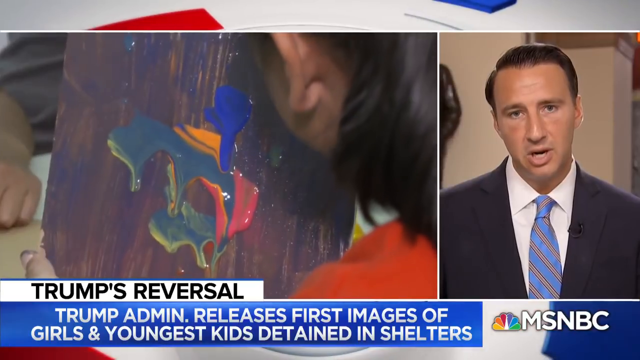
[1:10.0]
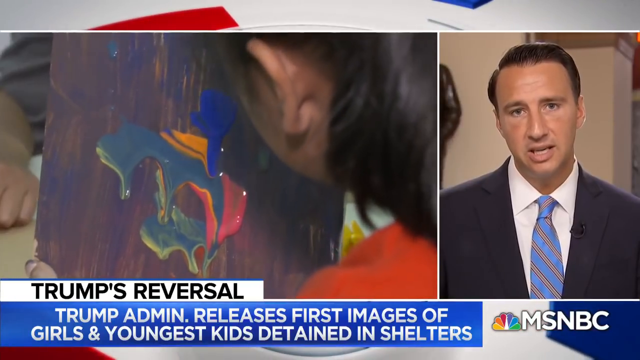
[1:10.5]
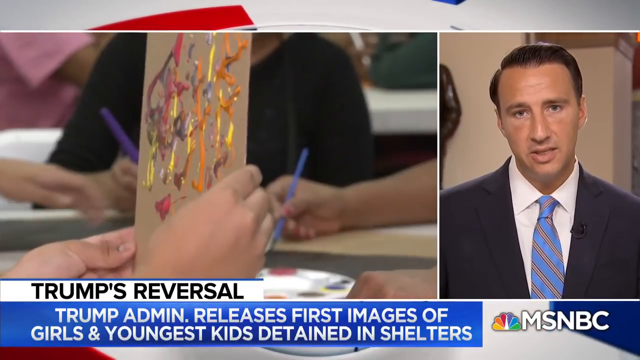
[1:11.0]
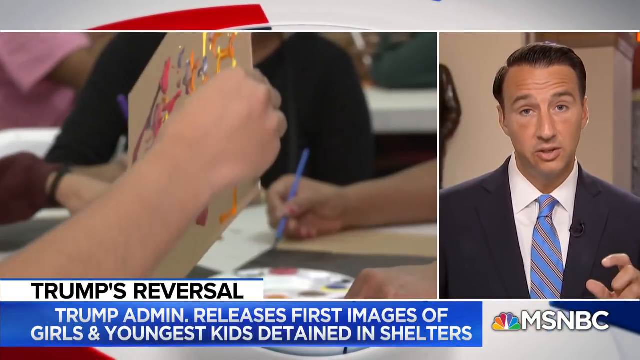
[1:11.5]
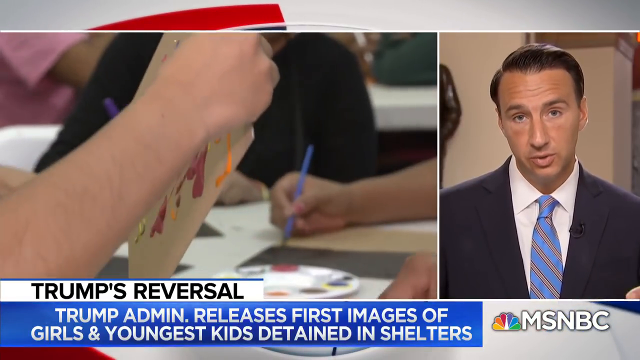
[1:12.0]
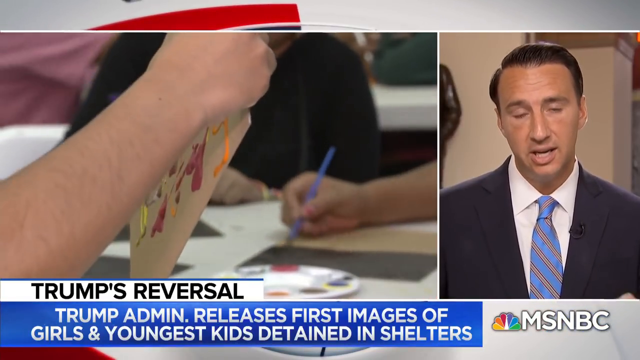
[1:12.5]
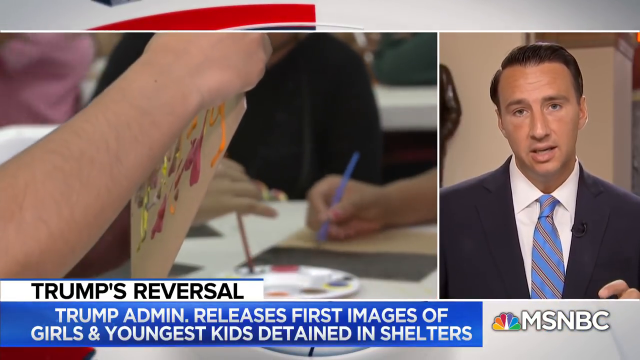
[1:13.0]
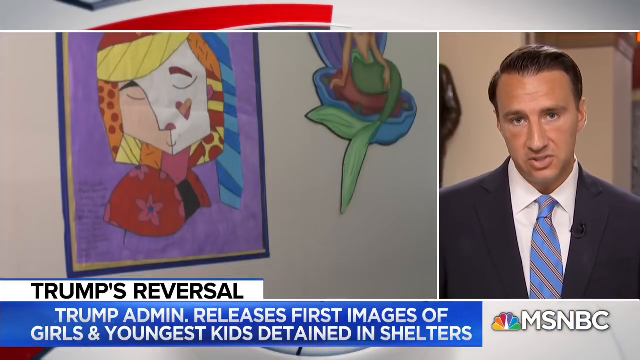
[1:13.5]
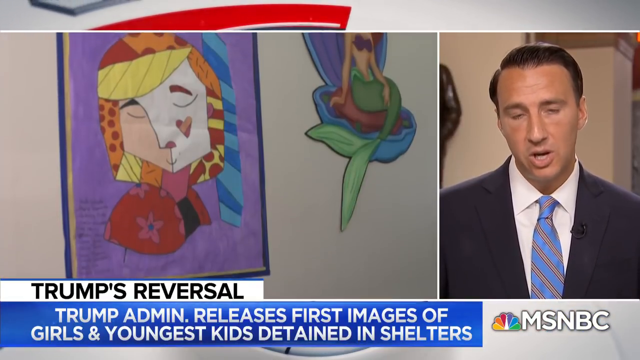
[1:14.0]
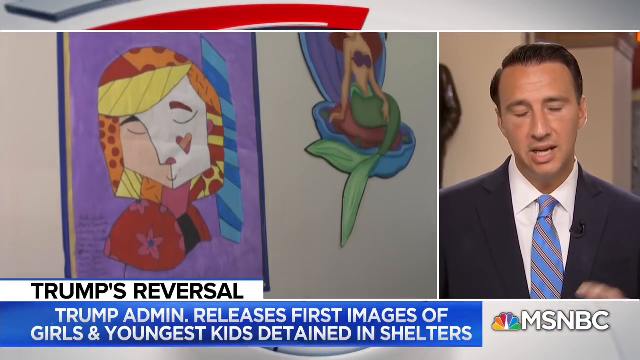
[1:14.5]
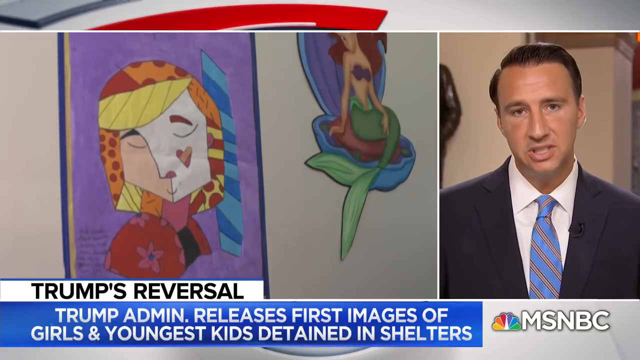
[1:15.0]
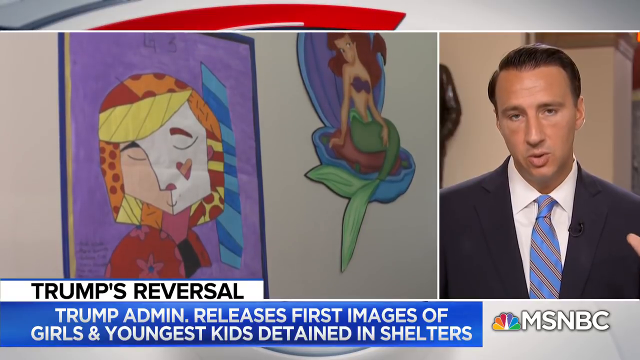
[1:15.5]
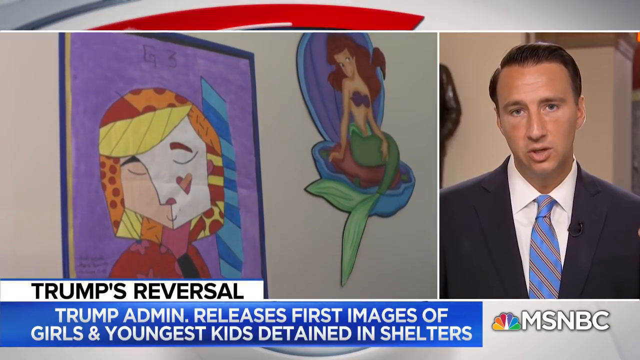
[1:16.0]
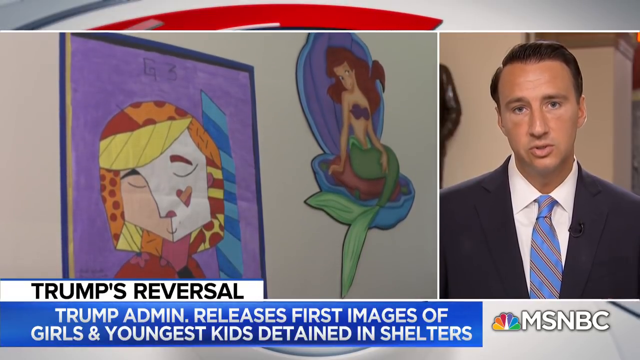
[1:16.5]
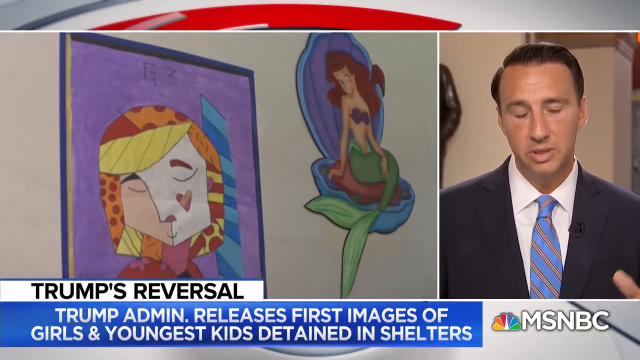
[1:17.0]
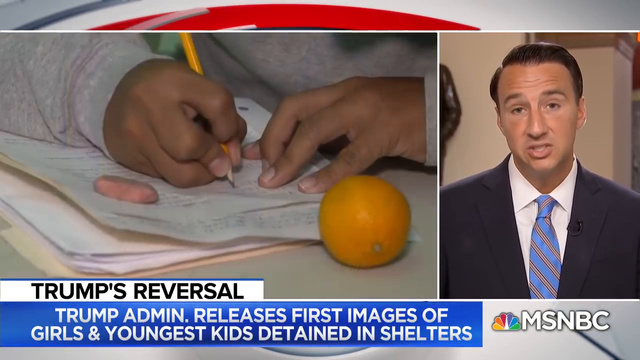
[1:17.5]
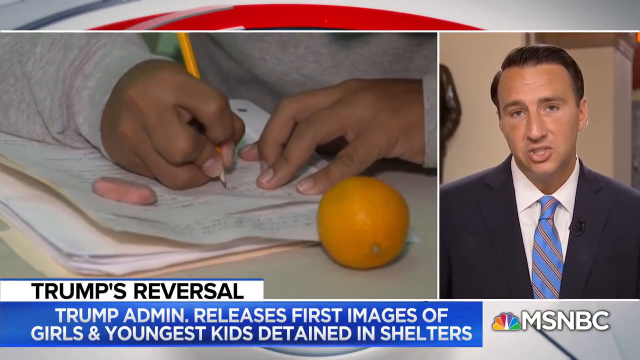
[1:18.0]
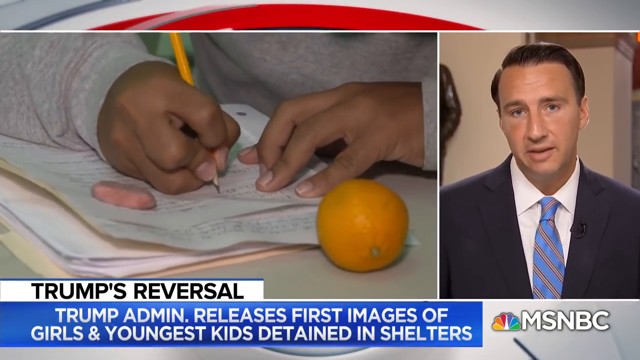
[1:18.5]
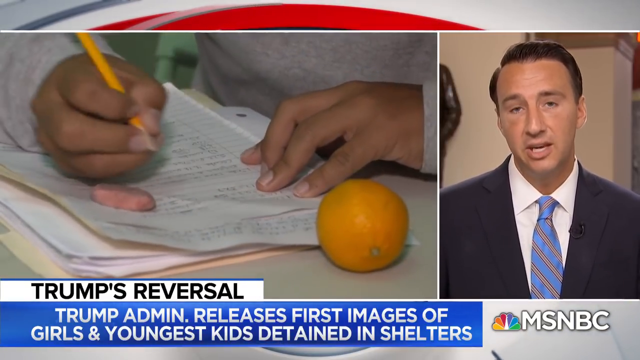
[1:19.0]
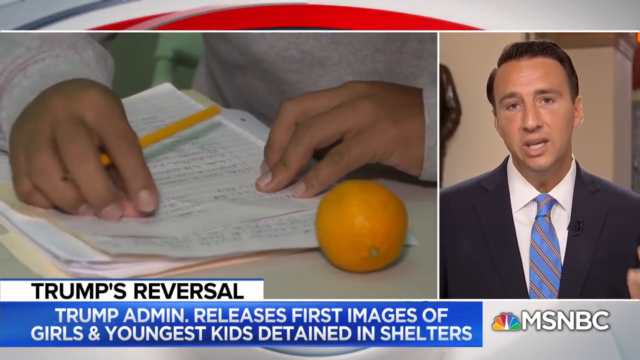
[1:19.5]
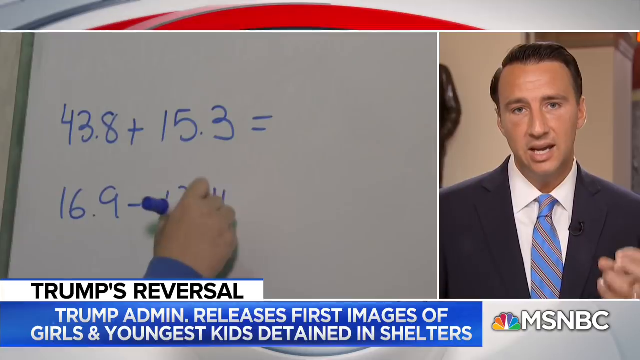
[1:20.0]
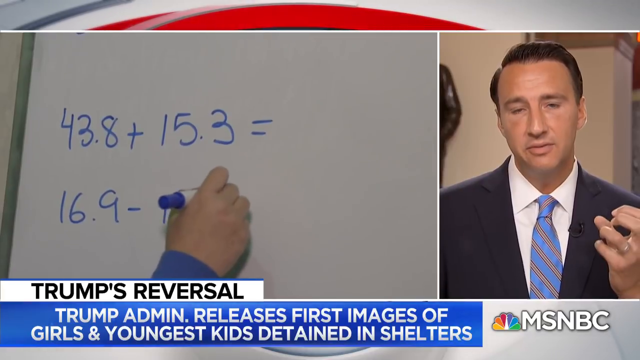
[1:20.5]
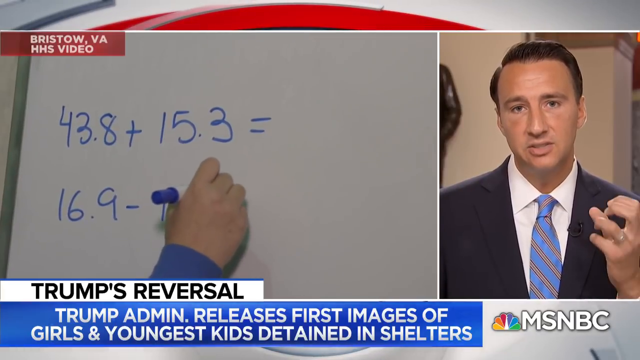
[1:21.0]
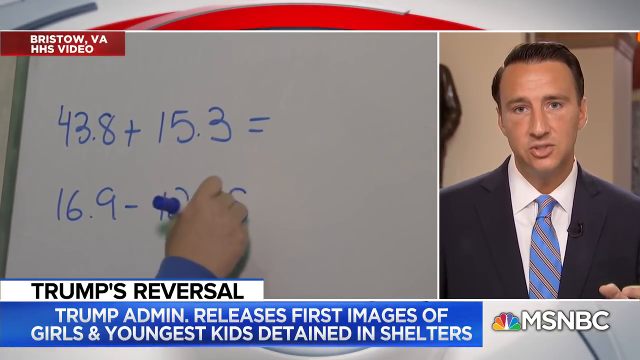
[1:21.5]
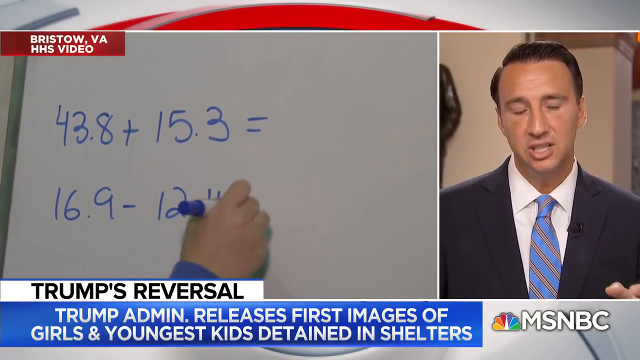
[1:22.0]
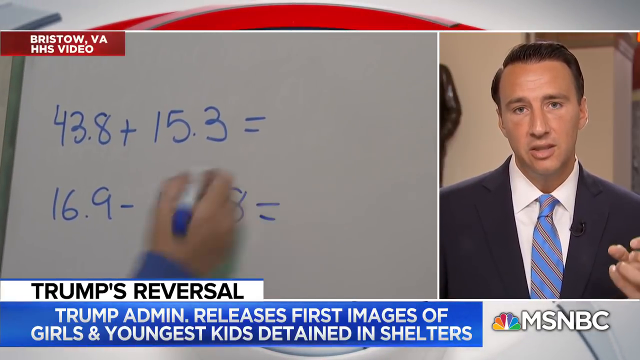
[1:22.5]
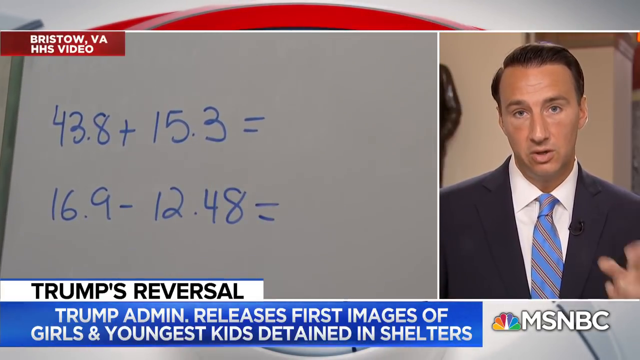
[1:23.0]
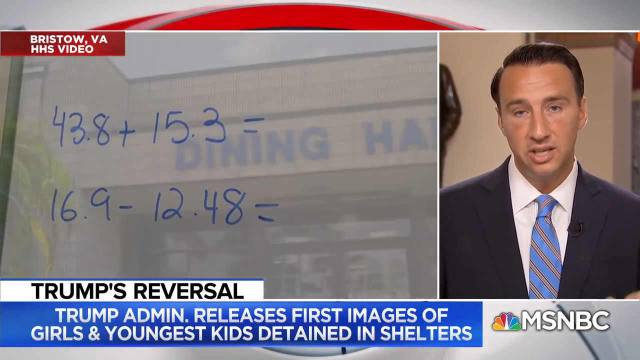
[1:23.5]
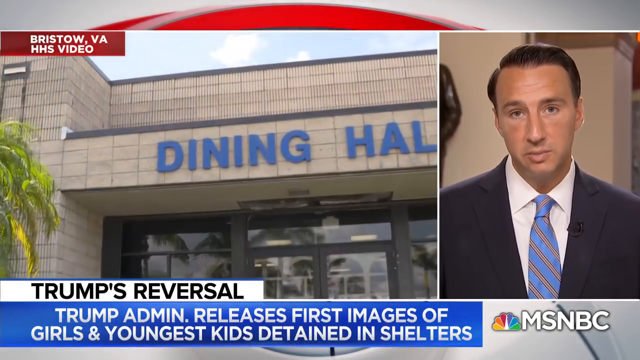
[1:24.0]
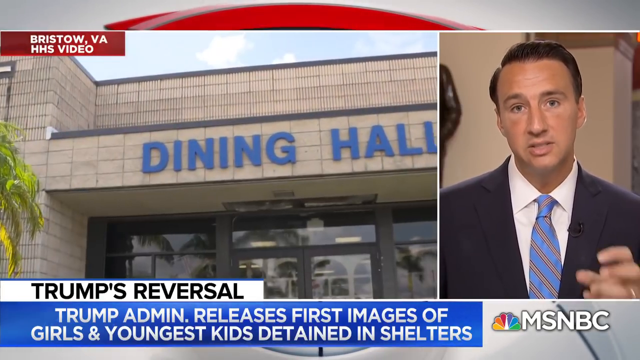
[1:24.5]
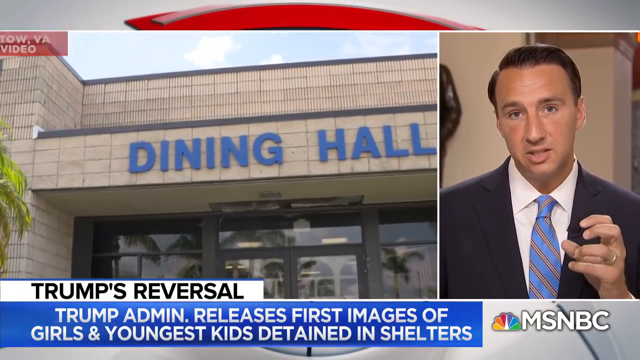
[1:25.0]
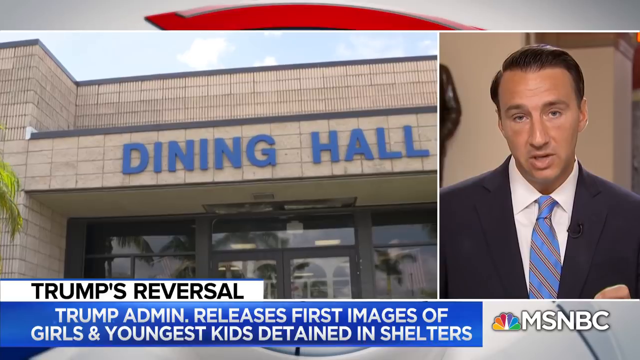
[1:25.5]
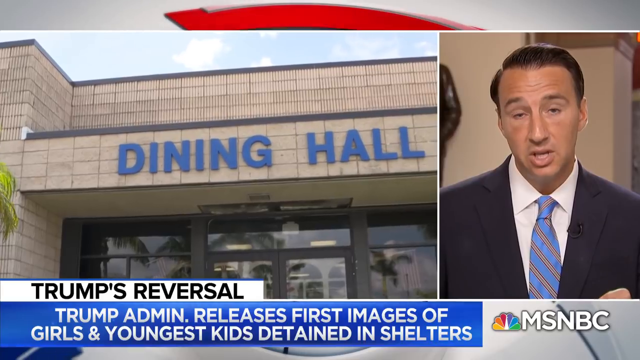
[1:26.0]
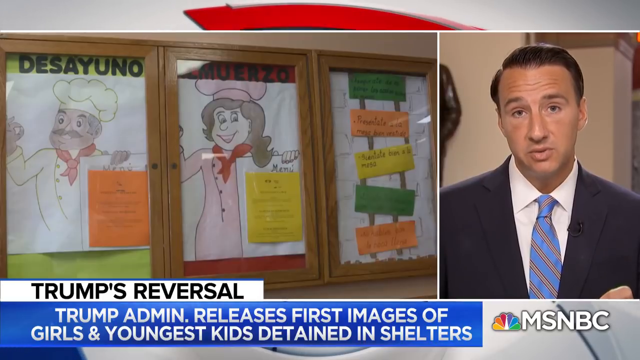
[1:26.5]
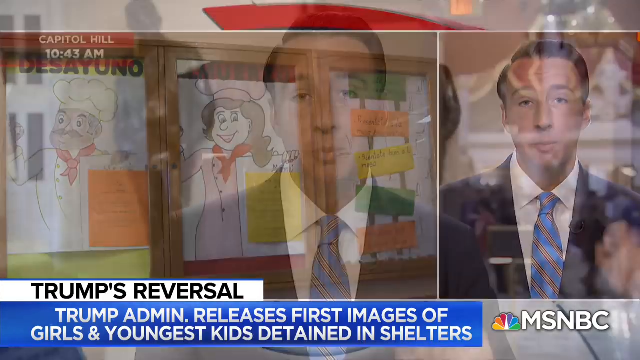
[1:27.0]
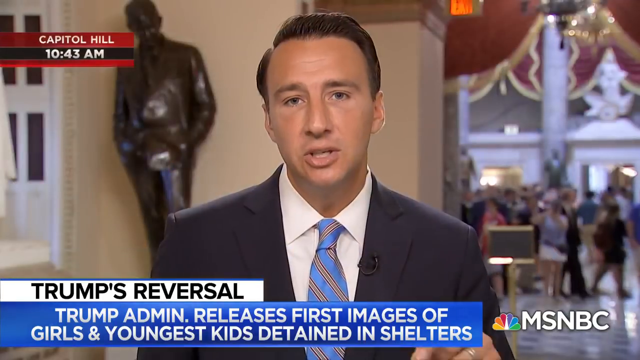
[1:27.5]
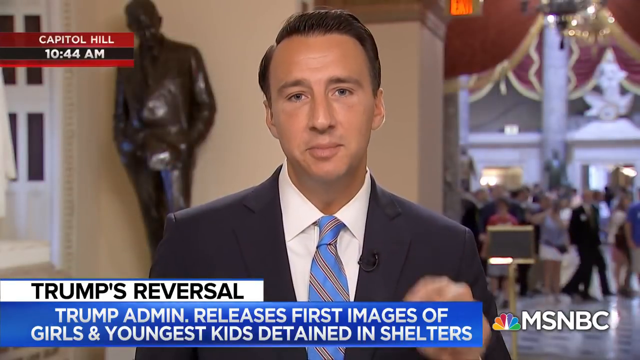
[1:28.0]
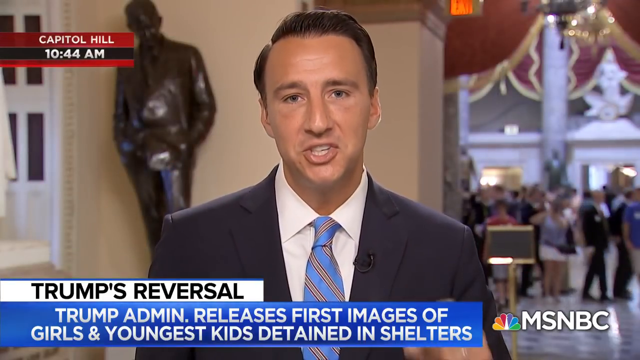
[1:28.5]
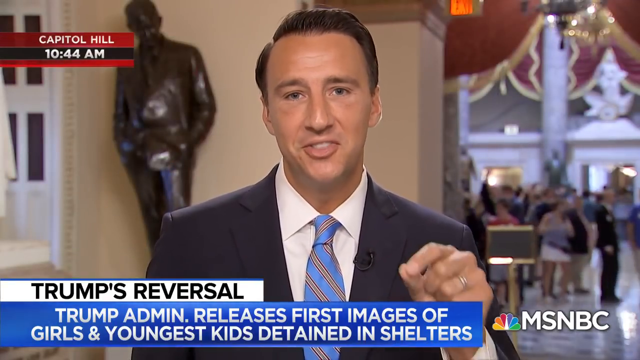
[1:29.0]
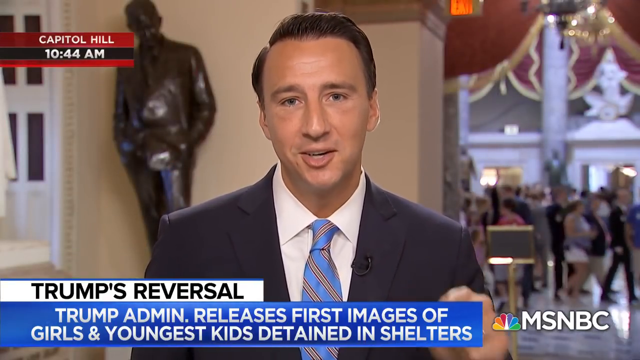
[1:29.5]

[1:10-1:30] Representative Ryan Costello, the Republican from Pennsylvania, is on the right-hand side of the screen, while the left two-thirds shows the girl holding up the painting. Its whole background is very dark blacks and blues muddled together, and in the center dark blues, greens, oranges and what look like pinks are mixed together. Other images follow, apparently of pictures hanging on a wall: one is of the Little Mermaid, and another is a mix of patterns that seems to form a person with the face of a sheep. Another image shows a child writing, with only their hands, a pencil and sheets of paper visible; an orange is in front of them, and the papers are on top of a manila folder, perhaps homework. Another image, from an HHS video from Bristol, Virginia, shows an arm in a blue sleeve and a hand holding a blue whiteboard marker, writing math problems on a whiteboard that look like addition and subtraction with decimals: the first is 43.8 plus 15.3 equals, and the second is 16.9 minus 12.48. Next is another building where it says "dining hall", also from footage from Bristol, Virginia. Inside is a series of three images in wood and glass frames with cartoony drawings: a male in a white chef's uniform holding an orange menu, with the word "Desayuno" at the top; next to it the word "Almuerzo" with a female chef in a pink uniform holding a yellow menu; and in the last frame a series of short green, orange and yellow rectangular pieces of paper with writing on them. The video then returns to a full-screen image of the representative, who gestures a little more aggressively and seems to be getting agitated or angry.